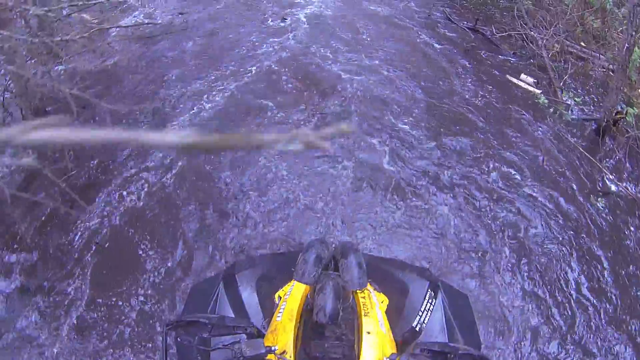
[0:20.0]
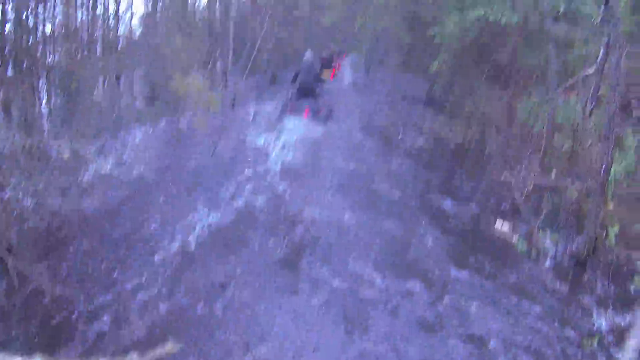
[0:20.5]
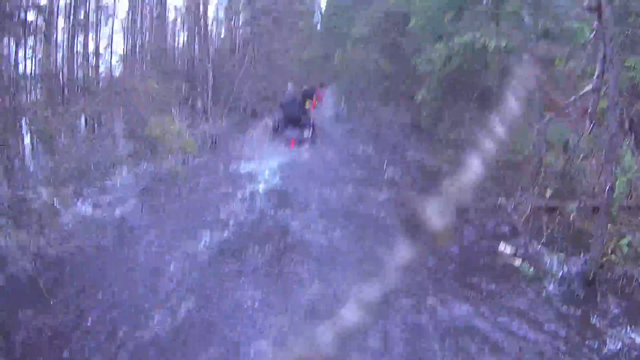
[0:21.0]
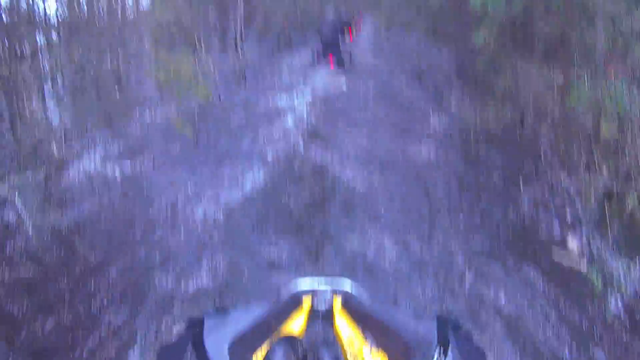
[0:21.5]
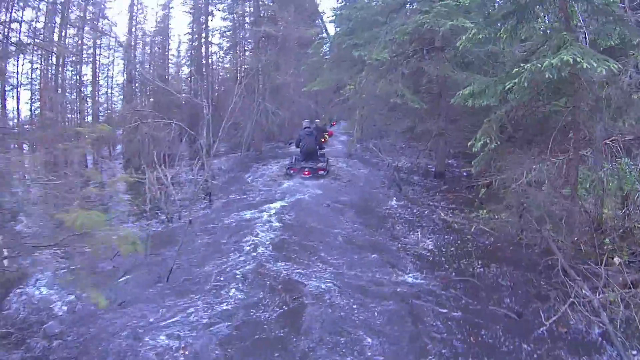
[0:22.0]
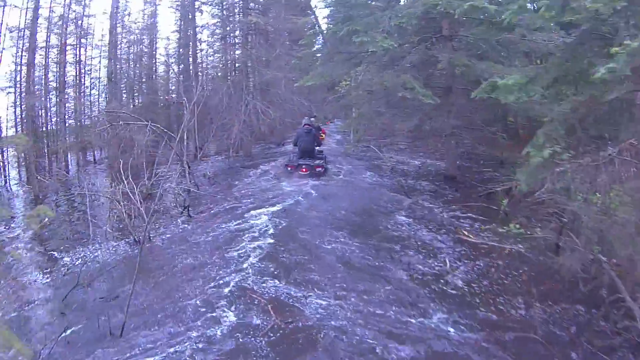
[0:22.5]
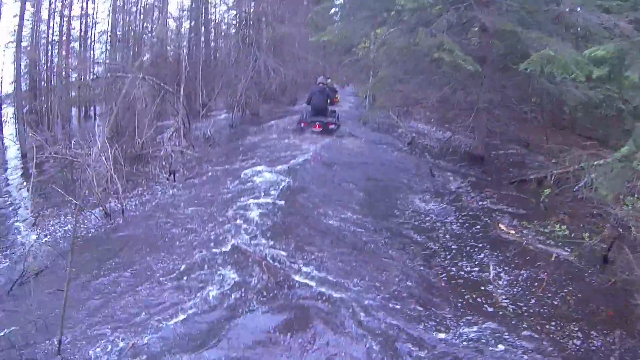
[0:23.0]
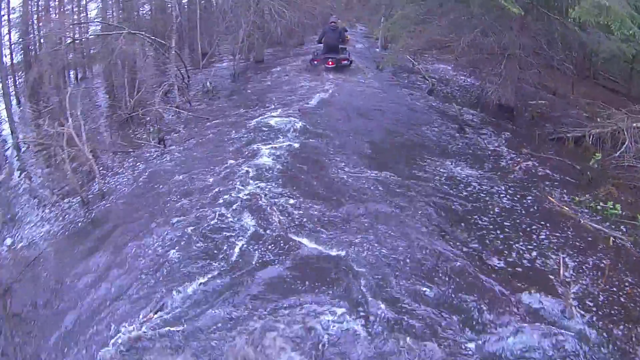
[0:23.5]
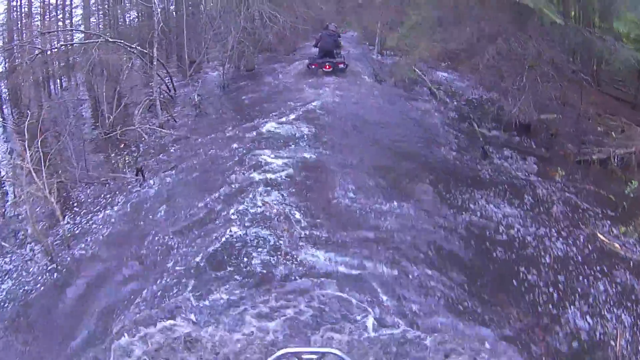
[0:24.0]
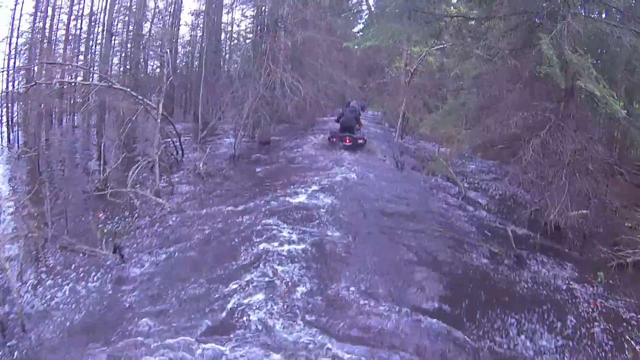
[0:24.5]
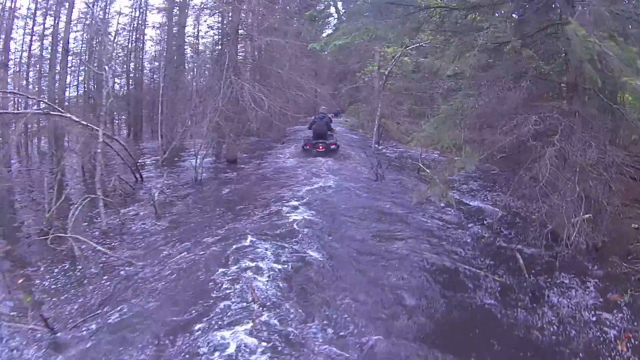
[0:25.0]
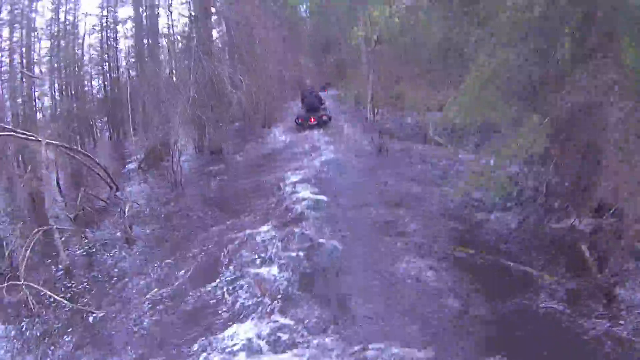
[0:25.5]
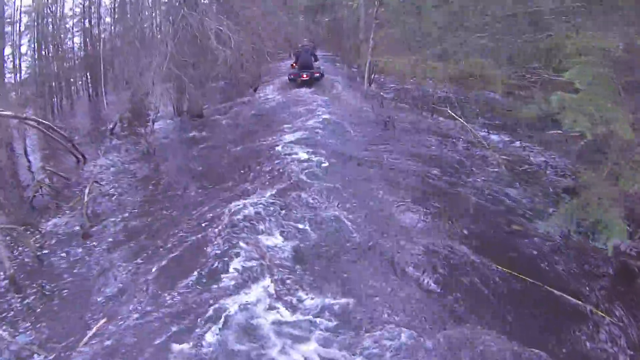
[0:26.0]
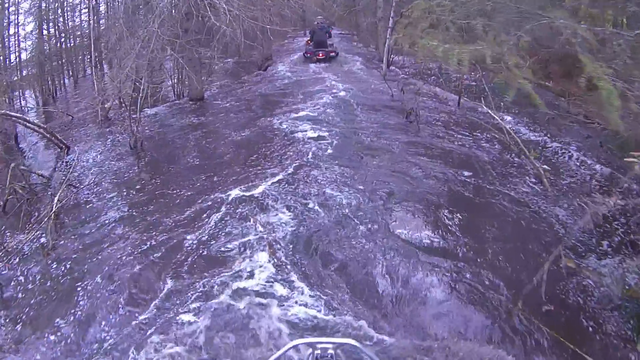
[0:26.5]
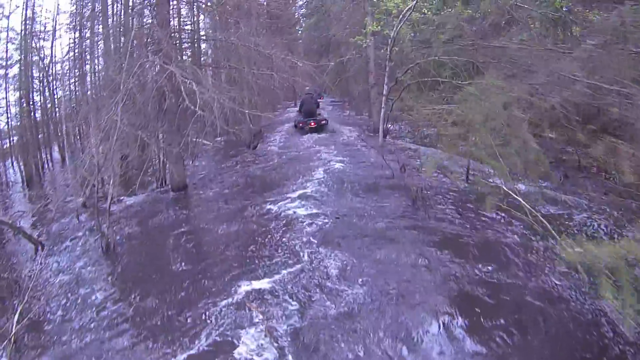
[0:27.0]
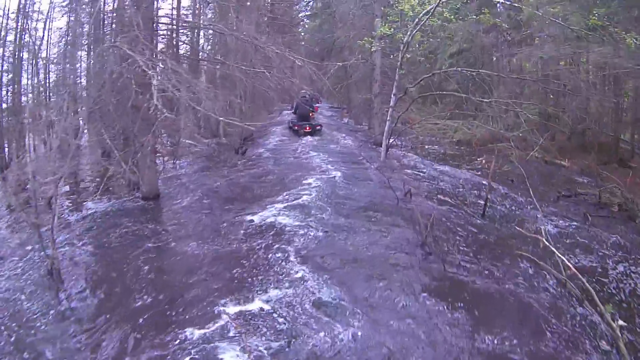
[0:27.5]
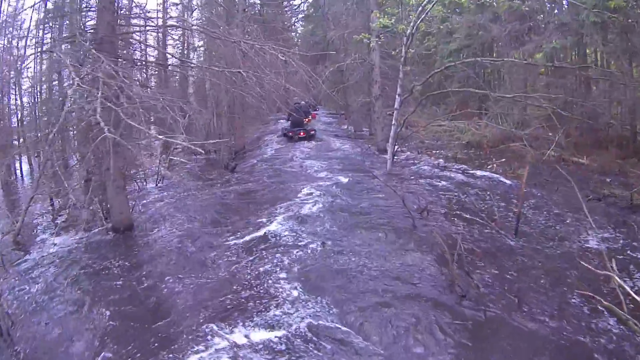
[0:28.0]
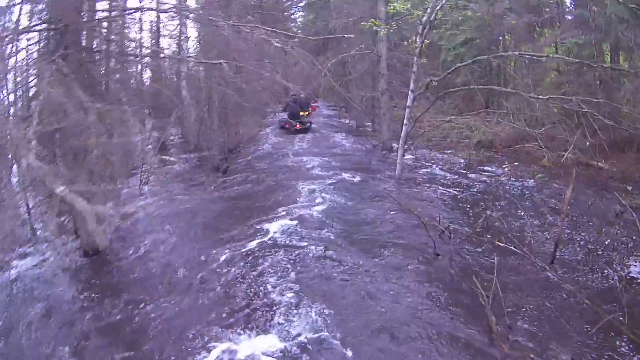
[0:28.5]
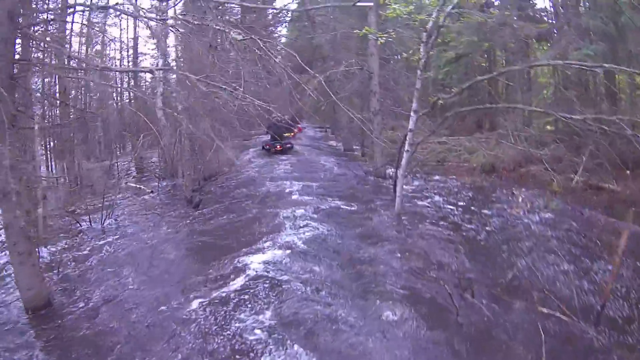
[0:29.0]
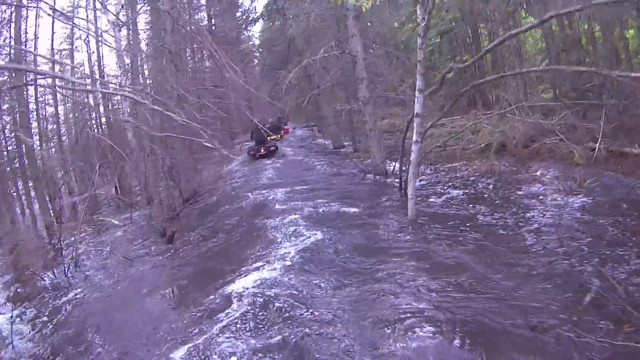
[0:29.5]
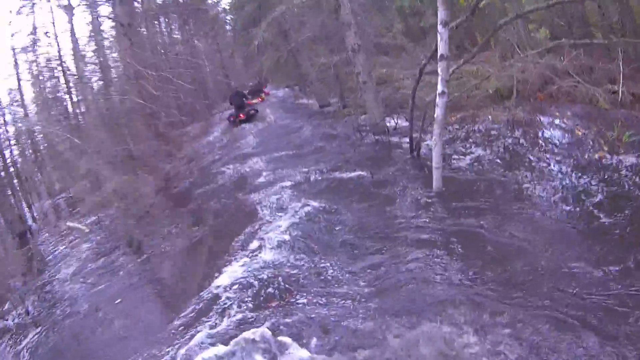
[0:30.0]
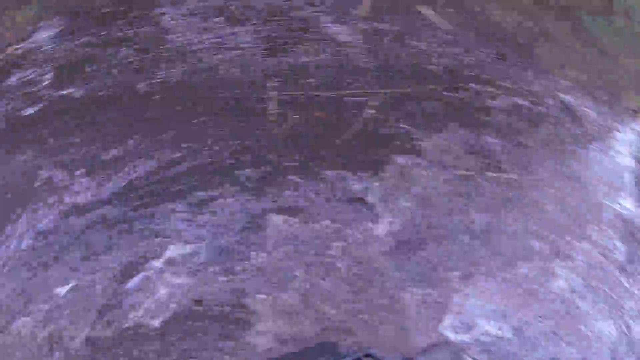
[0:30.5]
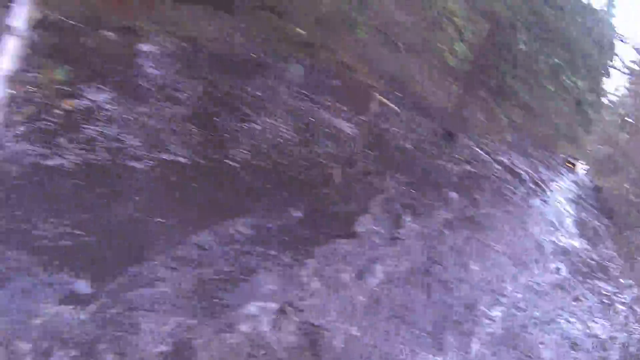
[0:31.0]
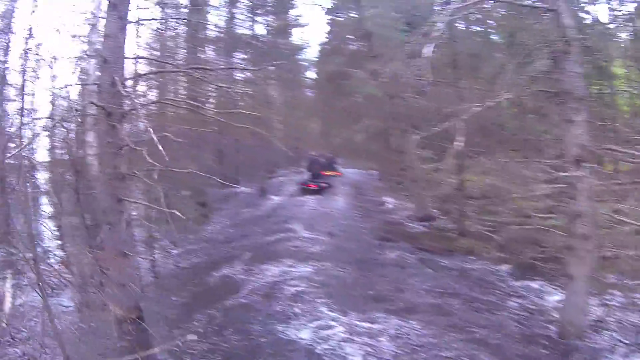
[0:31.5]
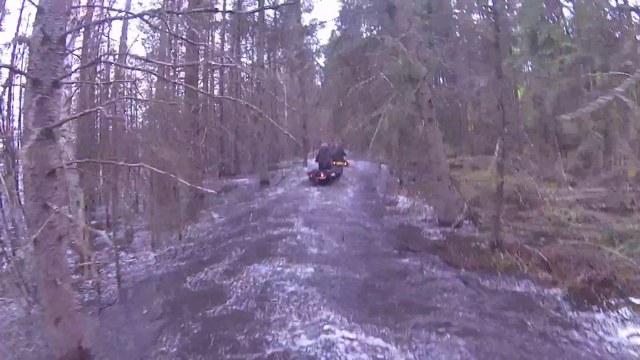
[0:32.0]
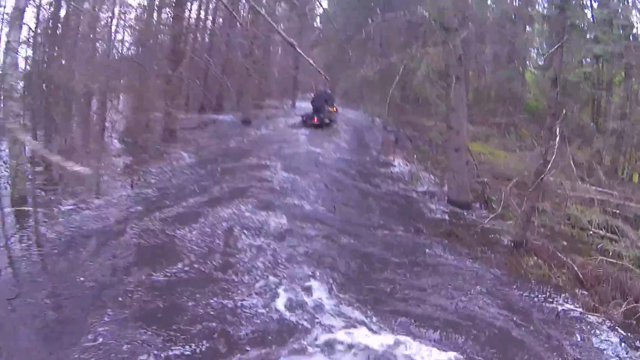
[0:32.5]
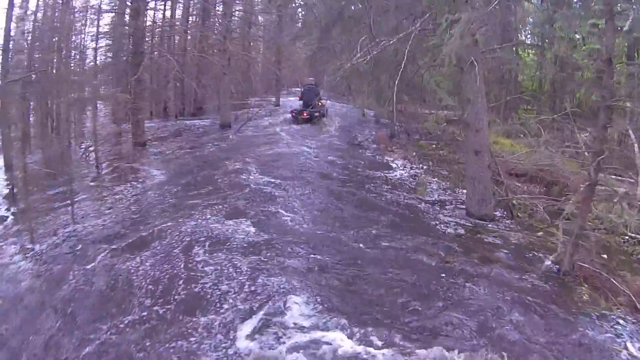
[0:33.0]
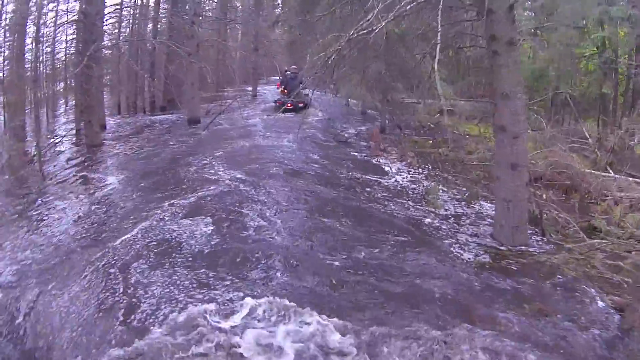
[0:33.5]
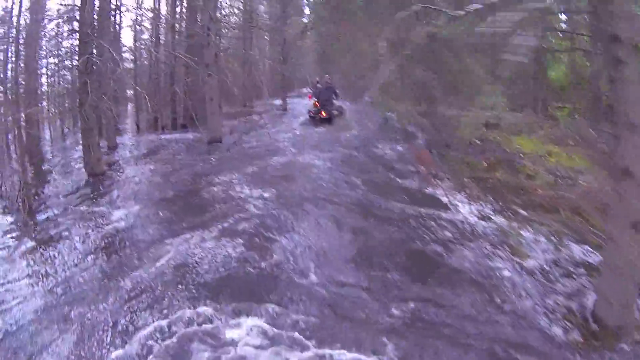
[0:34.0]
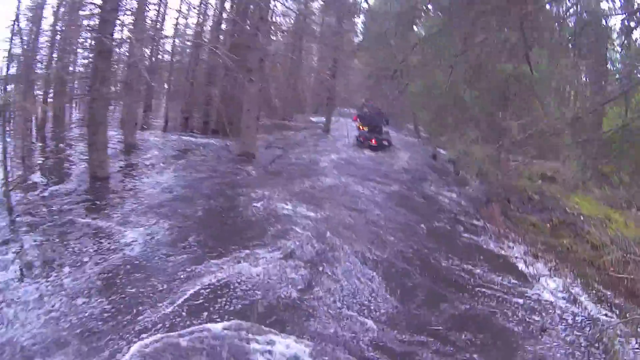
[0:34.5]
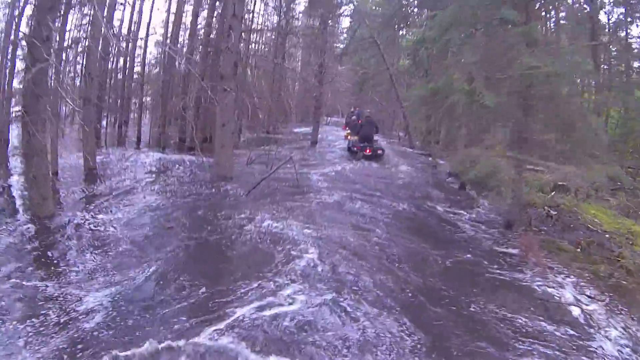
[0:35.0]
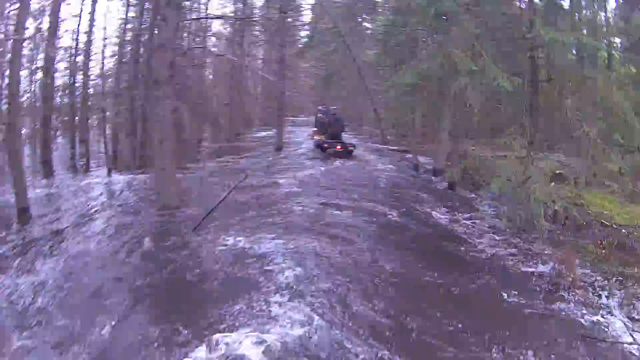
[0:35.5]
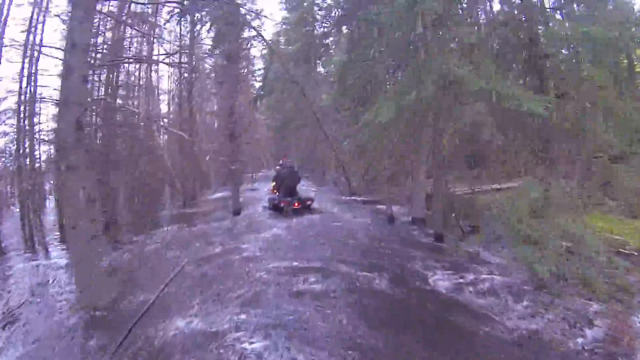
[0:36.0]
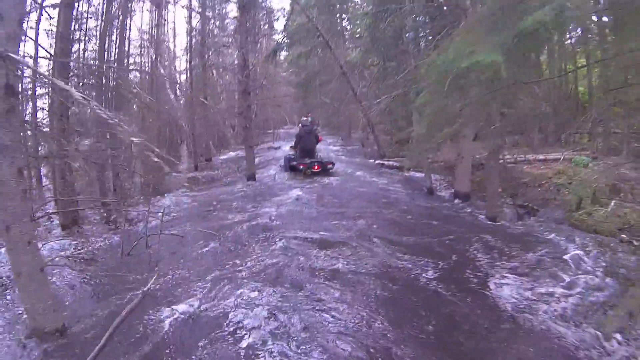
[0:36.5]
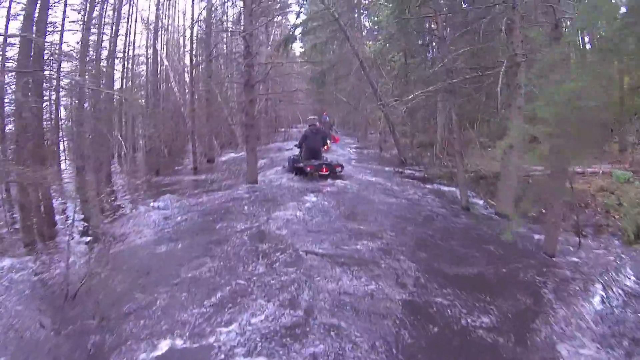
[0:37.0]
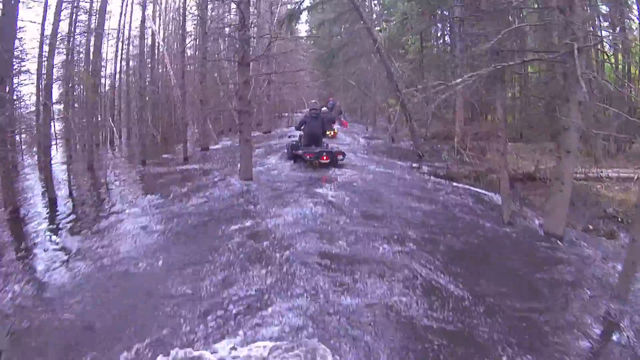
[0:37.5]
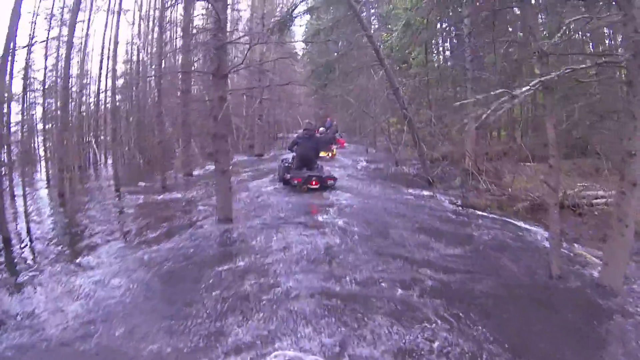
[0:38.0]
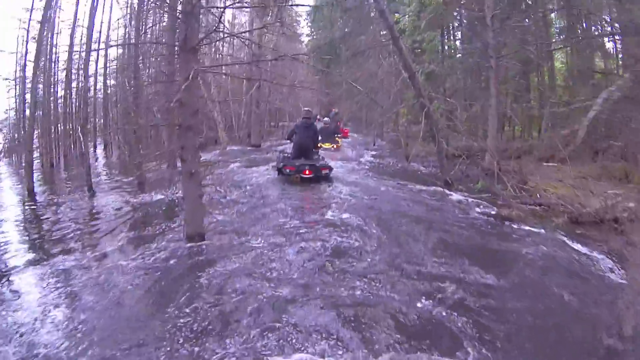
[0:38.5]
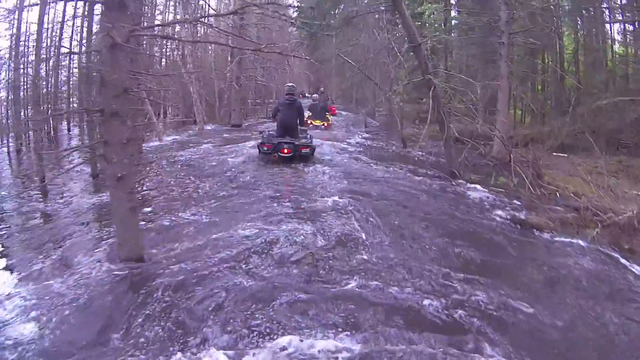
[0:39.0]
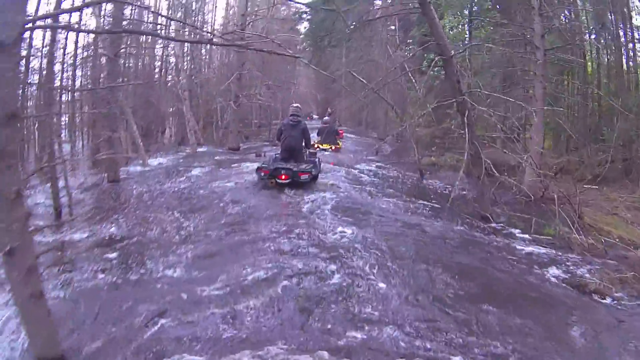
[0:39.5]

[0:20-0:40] There are really no leaves on the trees, so it may be winter or autumn. To the left, the area looks clearly flooded; it appears to have been a running path, with trees on both sides and a wide opening that the riders go slowly down. They move awkwardly, with a lot in the way, such as bent trees and branches. They are wearing gloves. There is a lot of debris on both sides of the path they ride along. They look around from left to right as they ride, apparently looking for something; they could possibly be searching for people, though it could also be a sport.